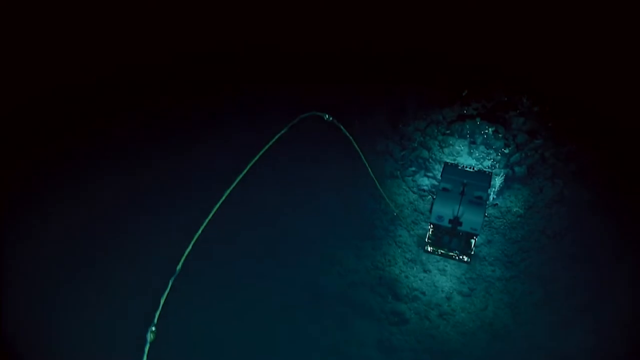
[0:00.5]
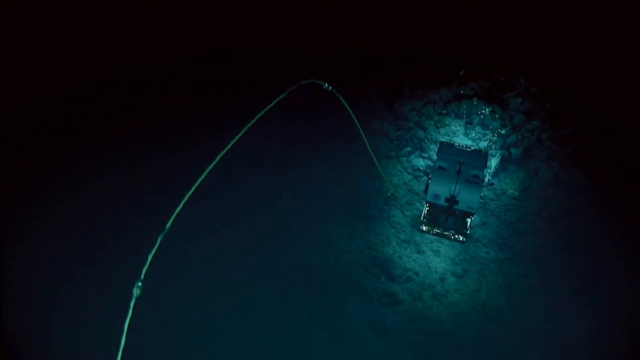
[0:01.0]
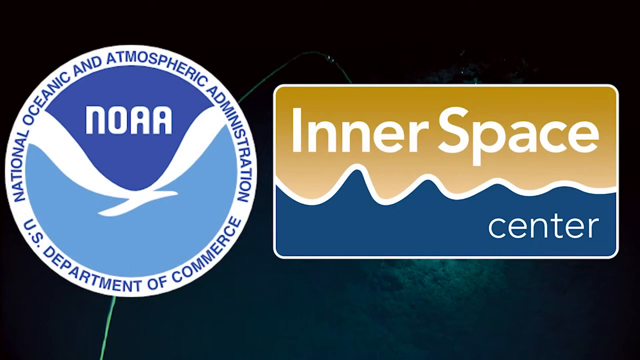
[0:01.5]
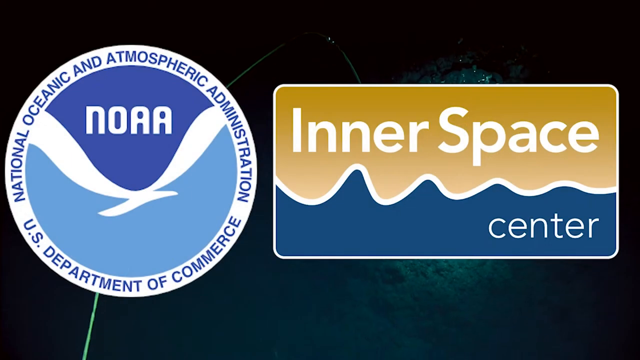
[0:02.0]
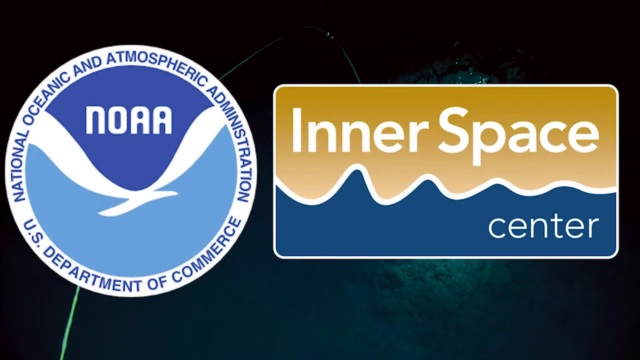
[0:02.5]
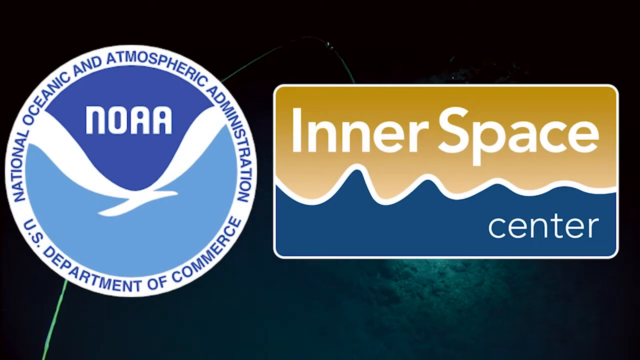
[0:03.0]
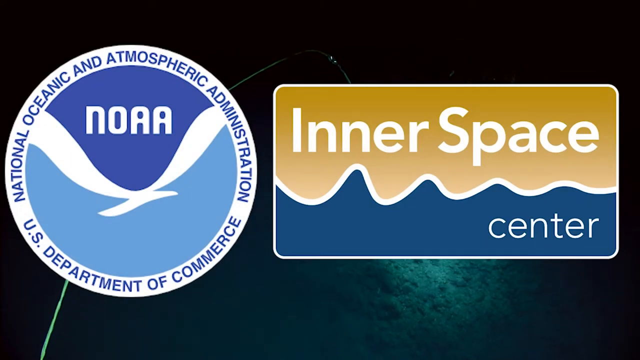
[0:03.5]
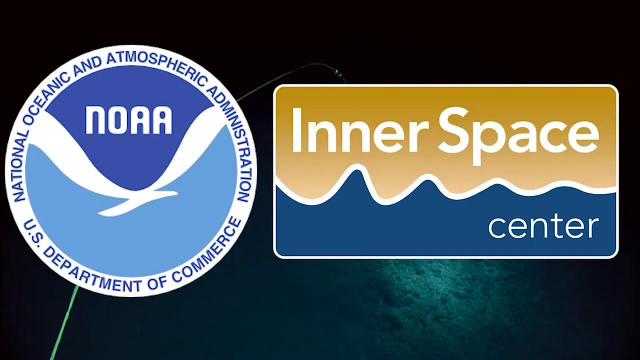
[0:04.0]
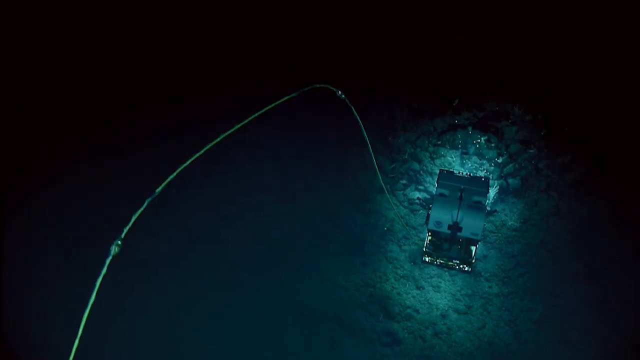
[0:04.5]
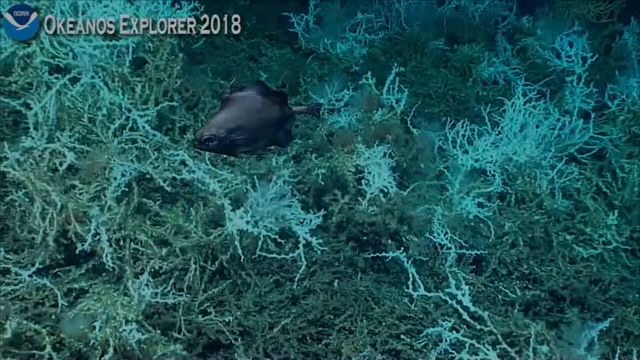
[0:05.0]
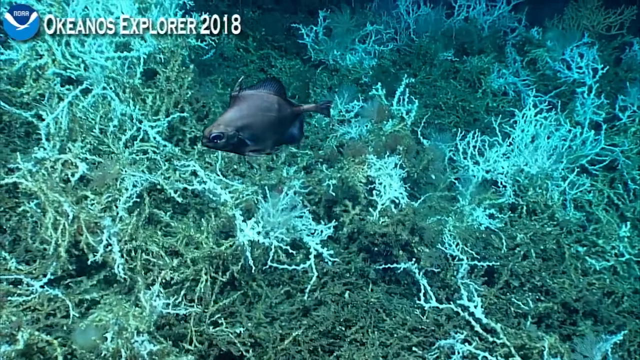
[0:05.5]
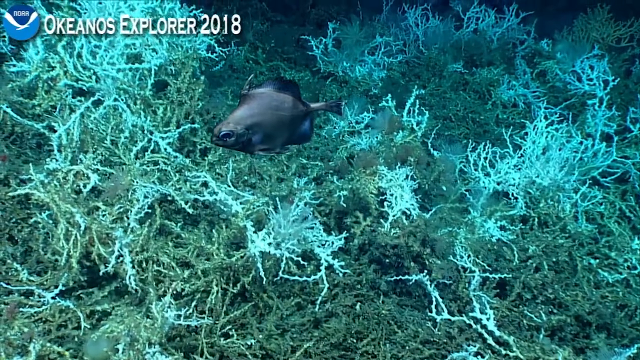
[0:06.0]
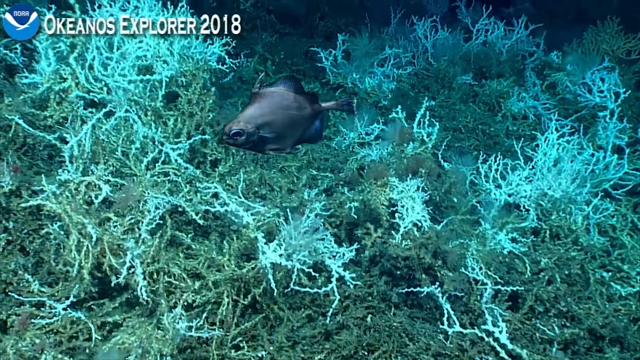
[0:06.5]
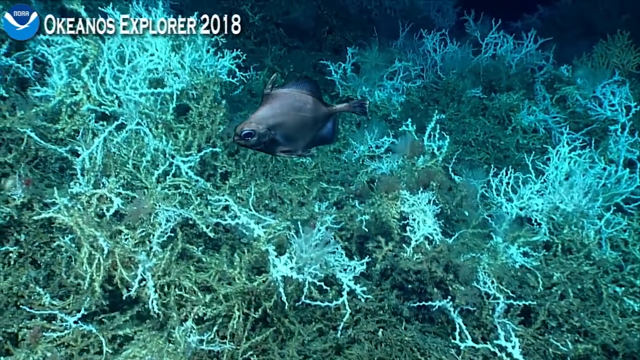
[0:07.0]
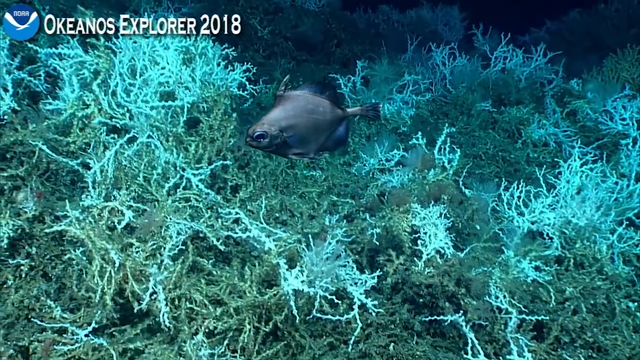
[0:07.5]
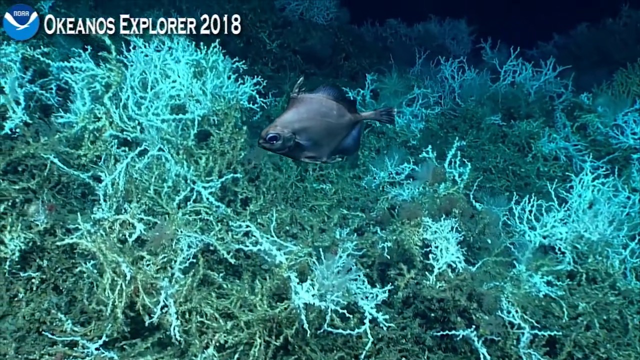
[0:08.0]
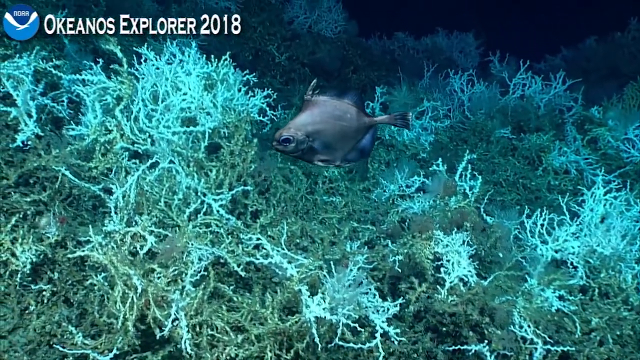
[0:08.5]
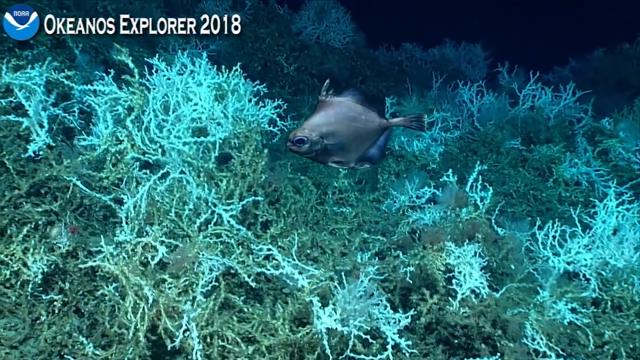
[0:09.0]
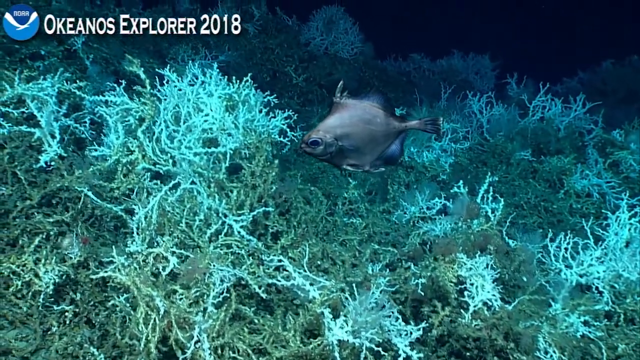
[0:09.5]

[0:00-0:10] A black screen fades into an underwater shot. A lightly illuminated object is on the right side of the screen, with a green illumination around it, before a number of logos appear at the center of the screen. On the left-hand side is a white circle with blue lettering reading "National Oceanic and Atmospheric Administration, U.S. Department of Commerce." Inside it is a blue circle with a seagull symbol in the center, and above the seagull, in white letters, it says "NOAA." On the right side of the screen is a square label: the bottom half has a minimalistic drawing of waves, and the top half is an orange sky above those waves. The top half reads "inner space" in white lettering, and the bottom half, in the wave illustration, reads "center" in white lettering. The logos fade away and the video transitions to an underwater coral reef with vegetation, where a dark-colored fish swims slightly above the vegetation. In the top left of the screen is the seagull logo, followed by white lettering reading "Okeanos Explorer 2018." The fish floats slowly in place above the vegetation as the scene ends.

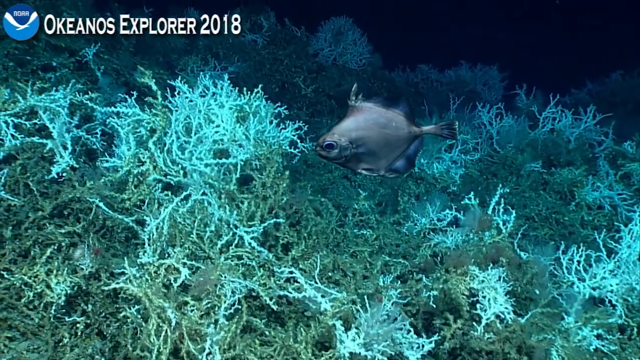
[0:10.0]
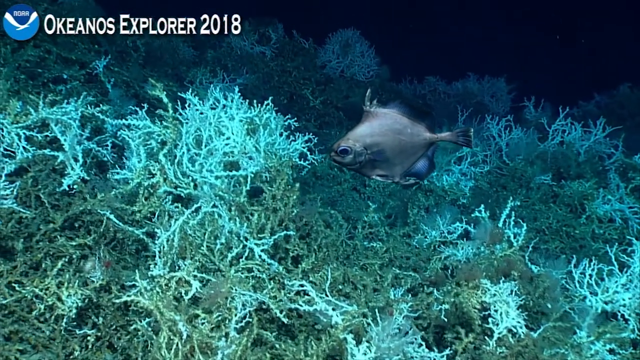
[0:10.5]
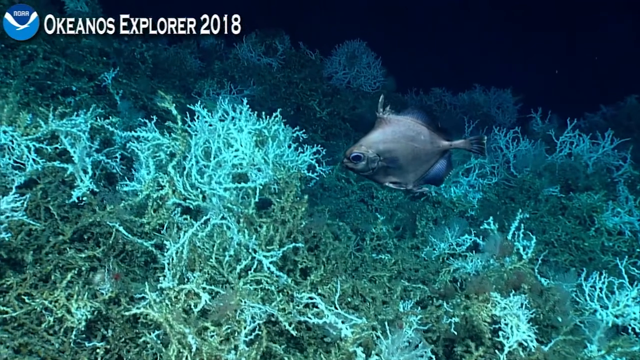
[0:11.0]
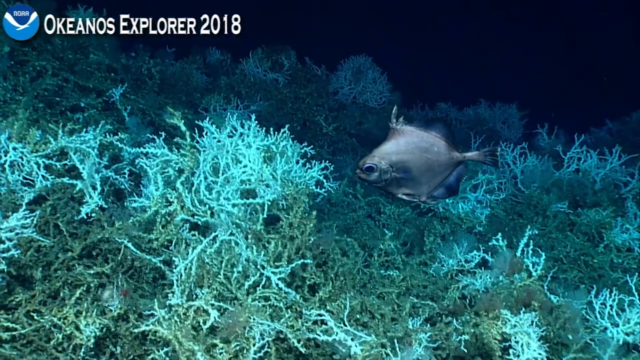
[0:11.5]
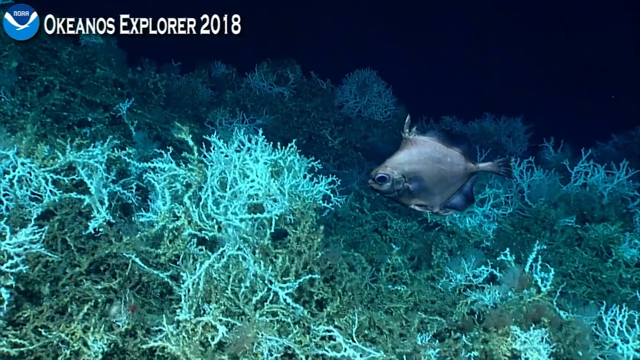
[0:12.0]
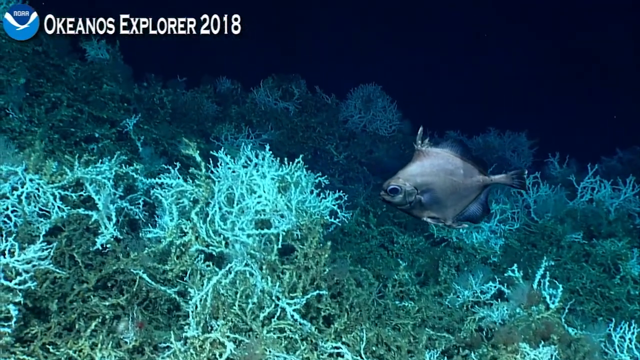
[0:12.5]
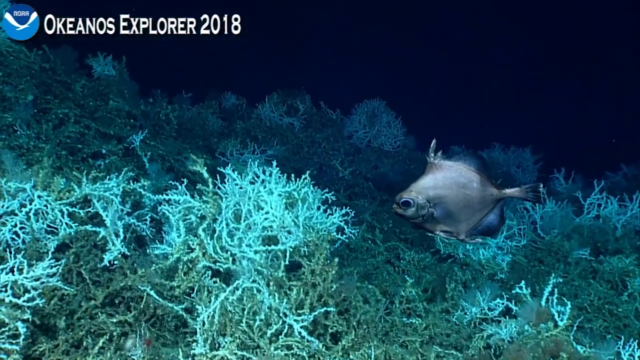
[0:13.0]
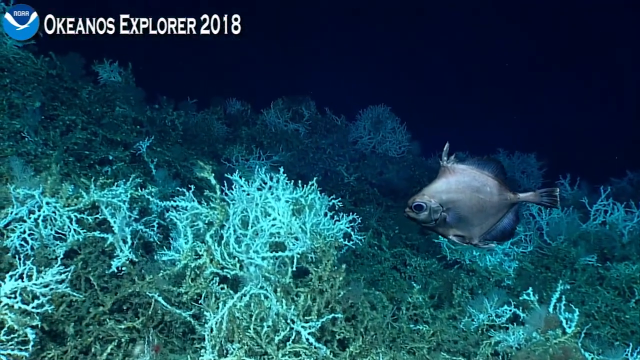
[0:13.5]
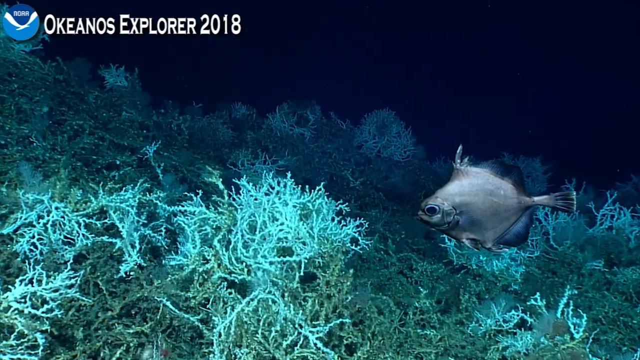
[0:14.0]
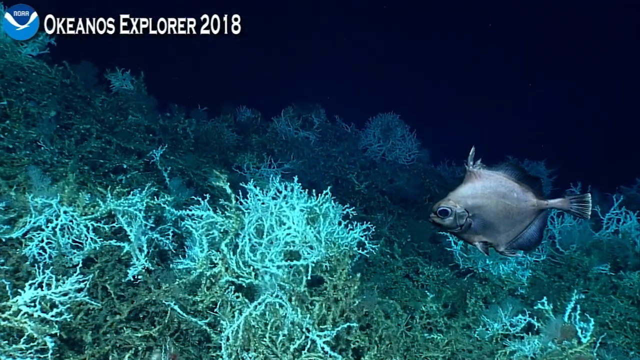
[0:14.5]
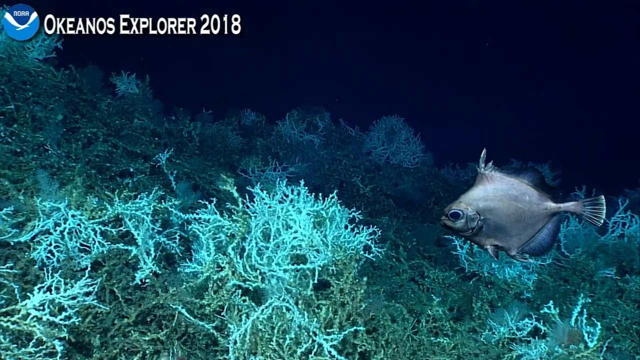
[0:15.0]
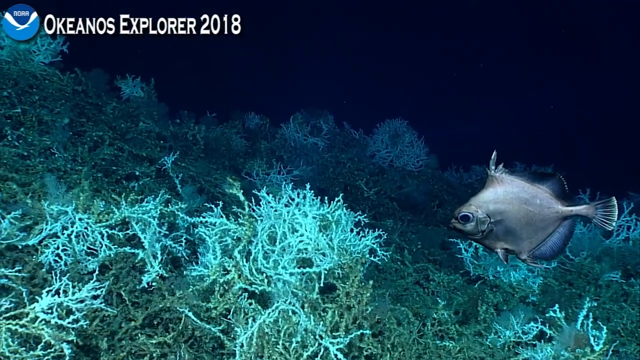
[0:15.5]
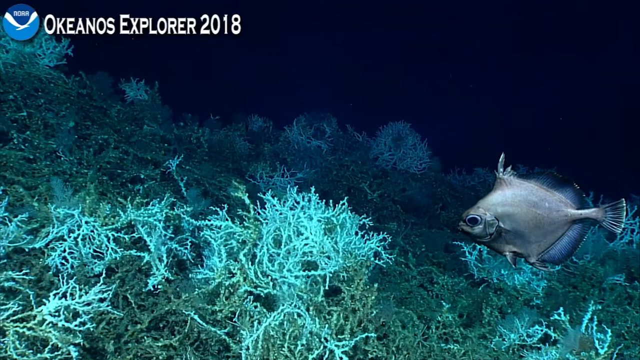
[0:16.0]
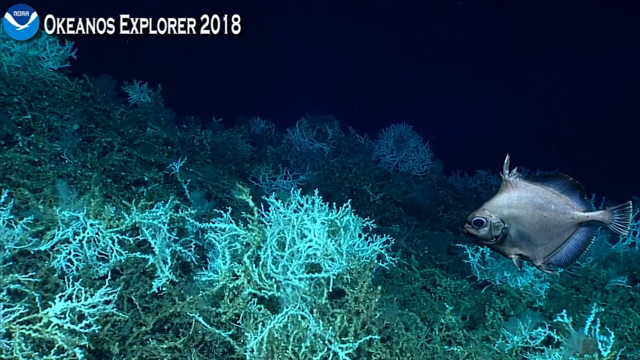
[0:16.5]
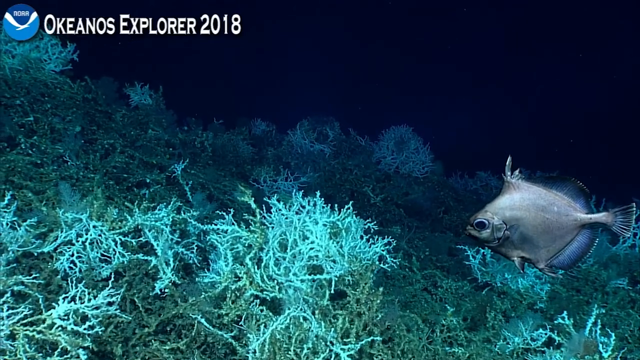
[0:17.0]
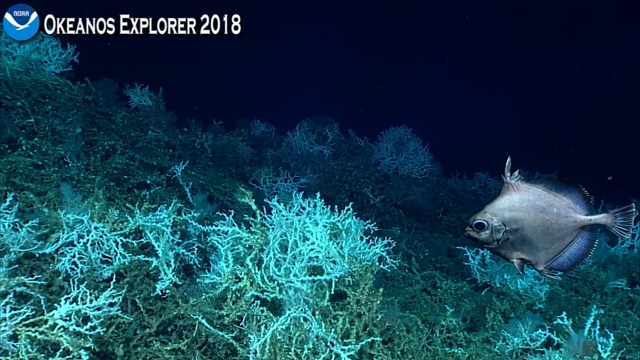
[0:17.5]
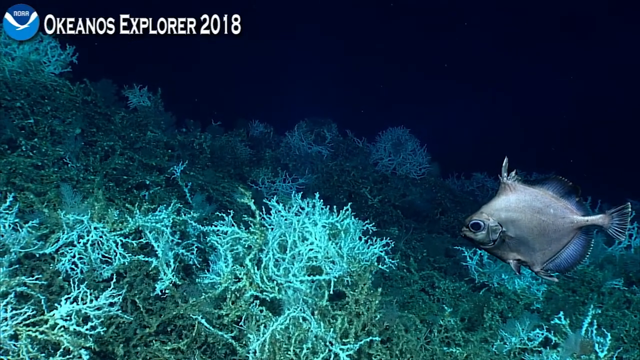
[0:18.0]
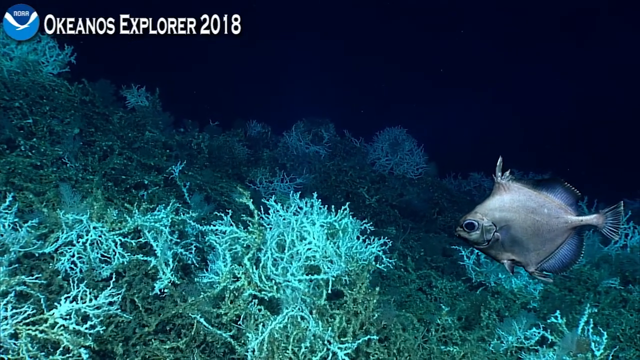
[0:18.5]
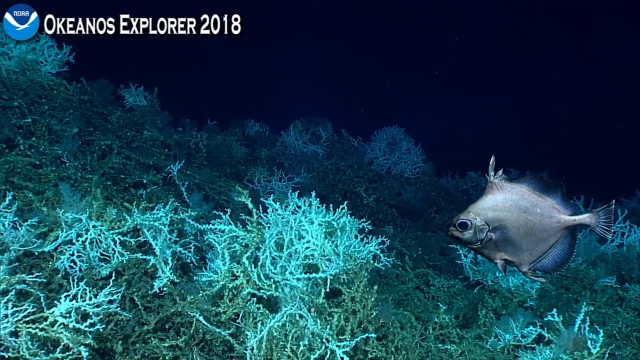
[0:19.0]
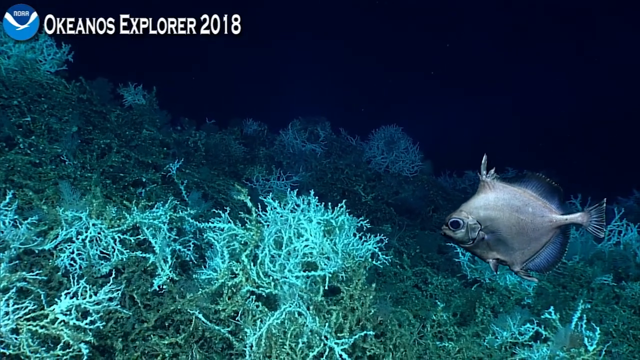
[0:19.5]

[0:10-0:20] A somewhat fixed observation shot shows a gray fish floating in the center right of the screen, above a coral reef with vegetation underneath it. A light from a submersible vehicle illuminates the fish. In the background, the water grows darker farther away from the scene. In the top left of the screen is a seagull symbol, and next to it, in white lettering, "Okeanos Explorer 2018." The shot focuses on the gray fish as it slowly floats up toward the right of the screen, and the camera positions itself higher, toward the left of the fish. The fish has a large black eye and stares toward the screen. It floats down toward the right of the screen as the scene ends.